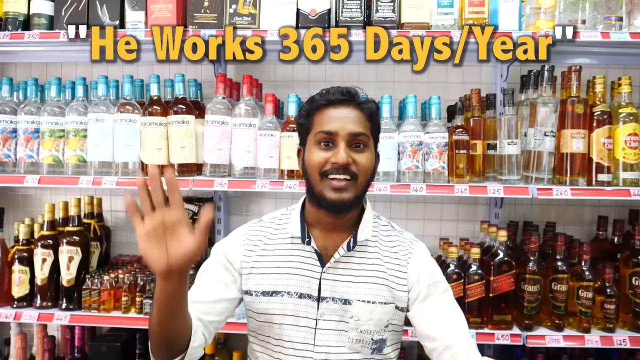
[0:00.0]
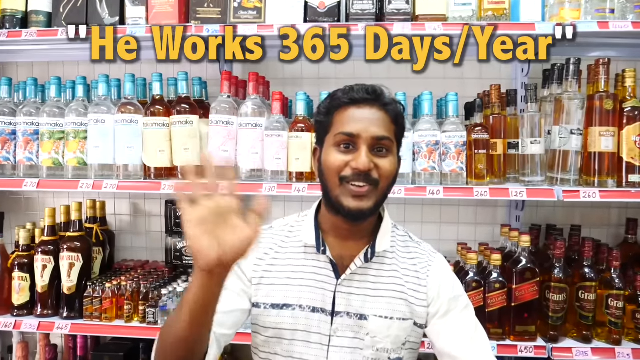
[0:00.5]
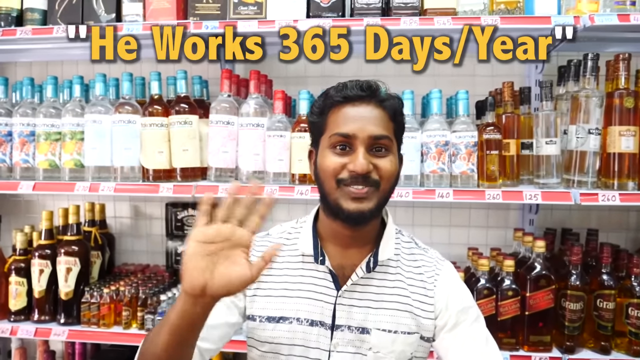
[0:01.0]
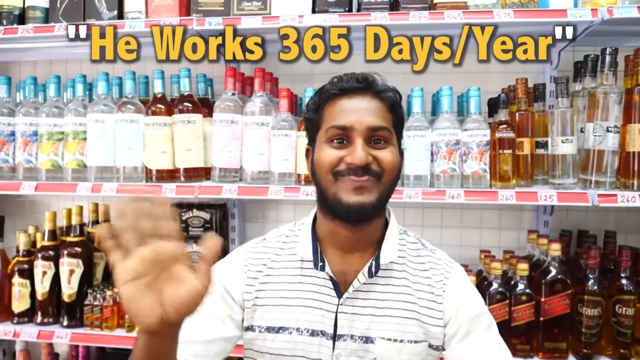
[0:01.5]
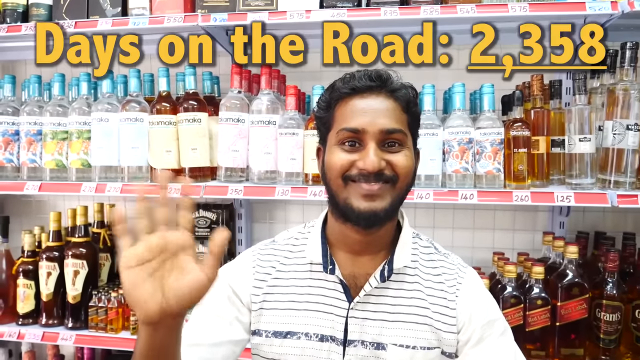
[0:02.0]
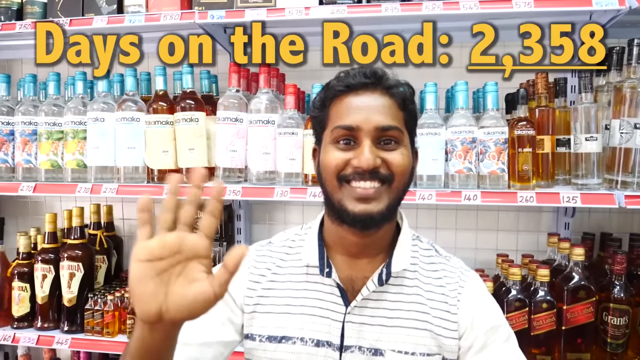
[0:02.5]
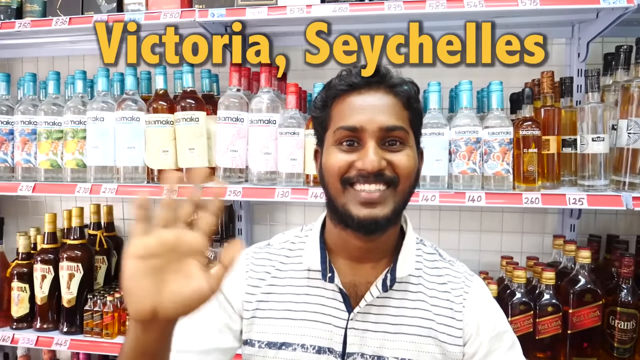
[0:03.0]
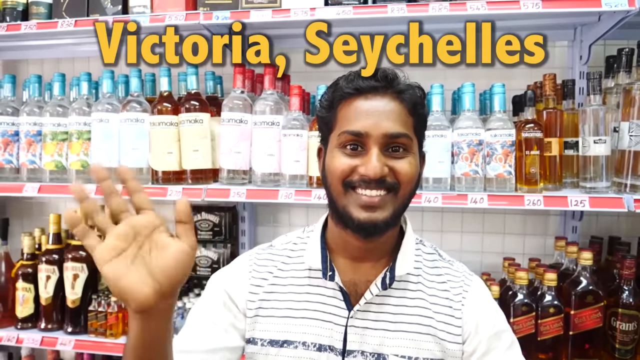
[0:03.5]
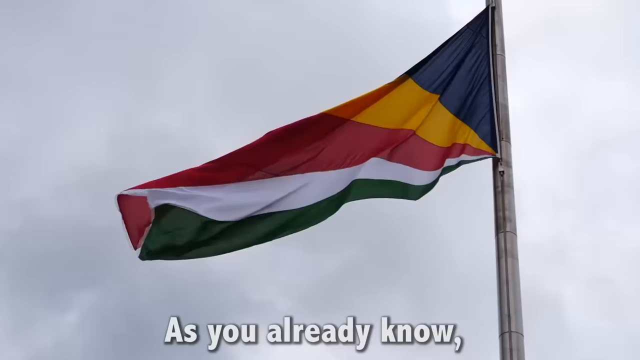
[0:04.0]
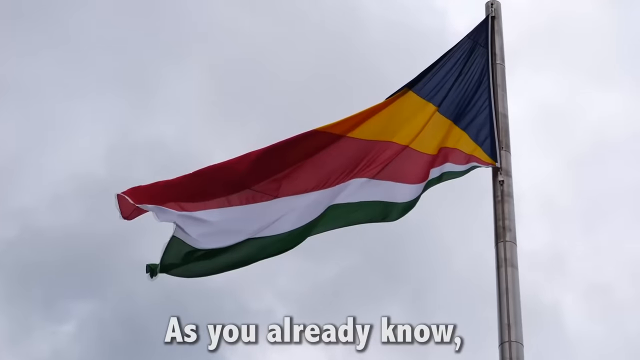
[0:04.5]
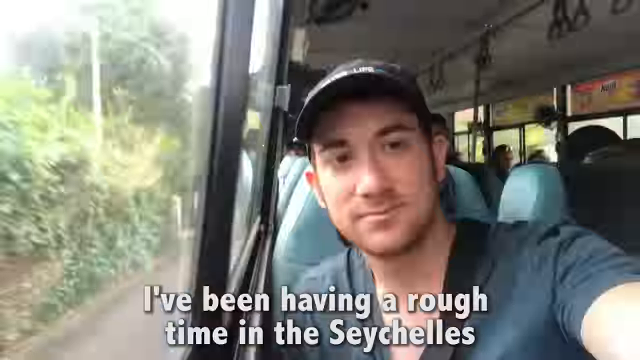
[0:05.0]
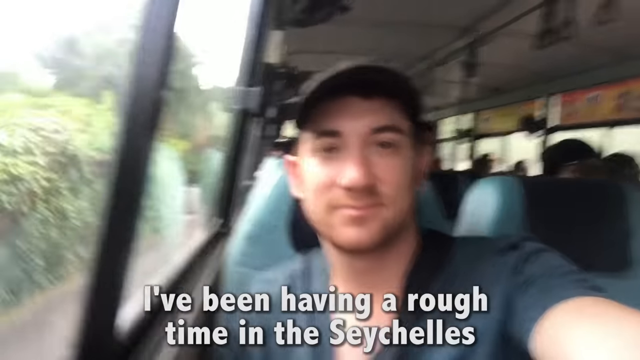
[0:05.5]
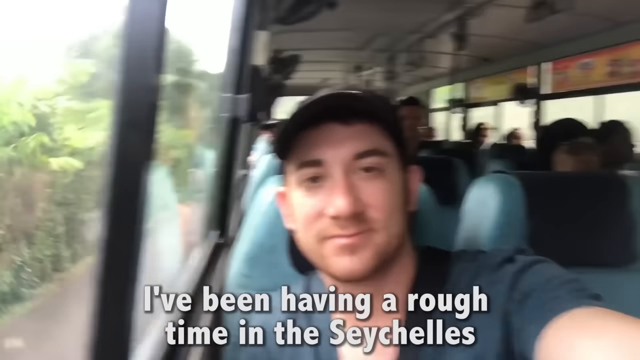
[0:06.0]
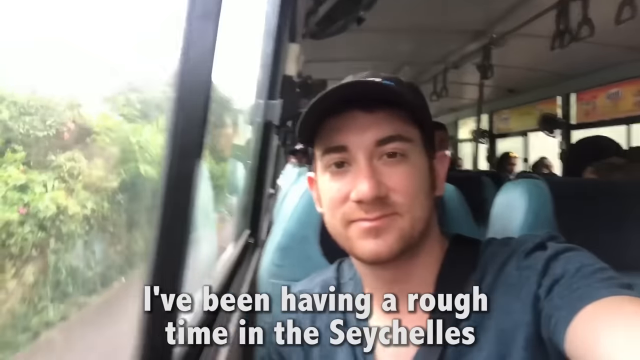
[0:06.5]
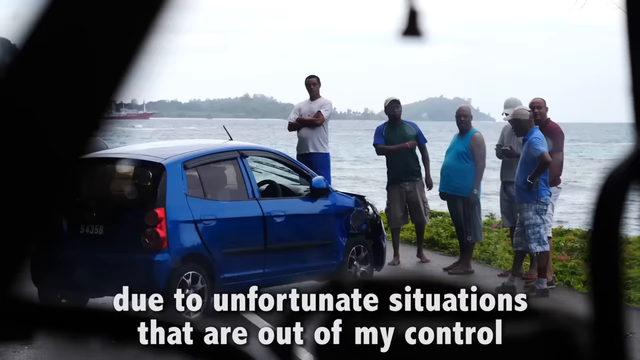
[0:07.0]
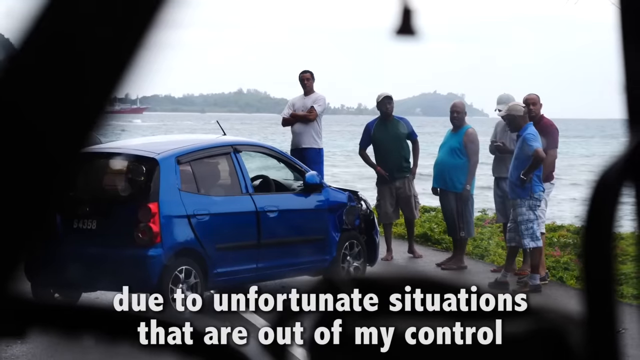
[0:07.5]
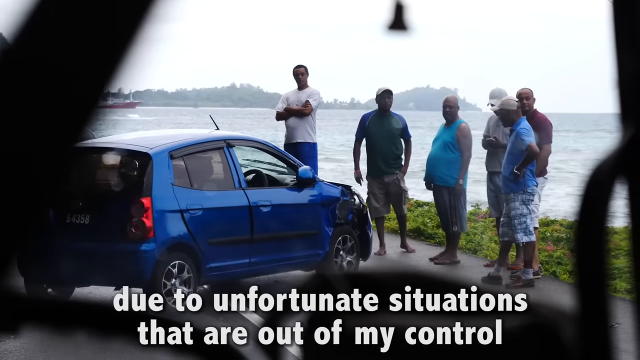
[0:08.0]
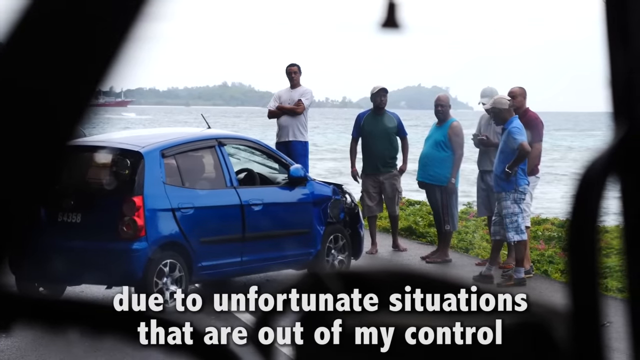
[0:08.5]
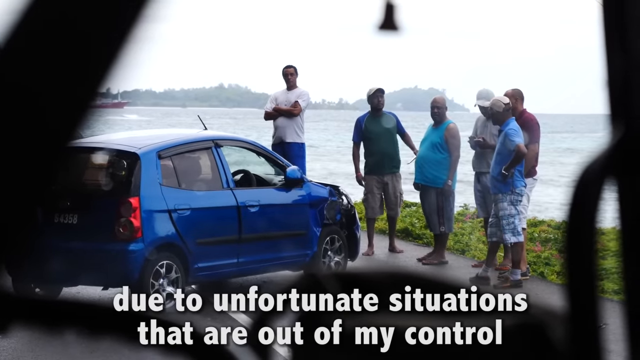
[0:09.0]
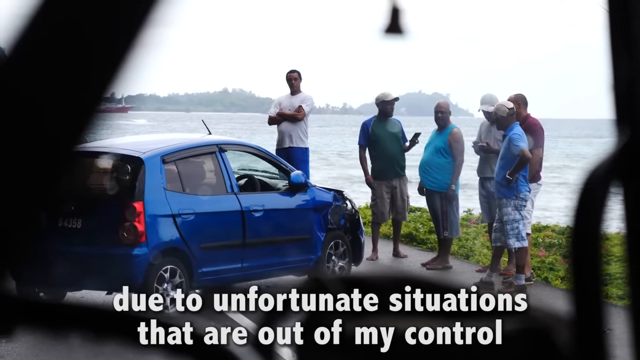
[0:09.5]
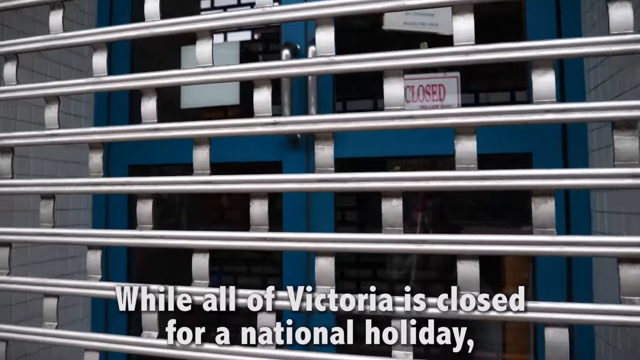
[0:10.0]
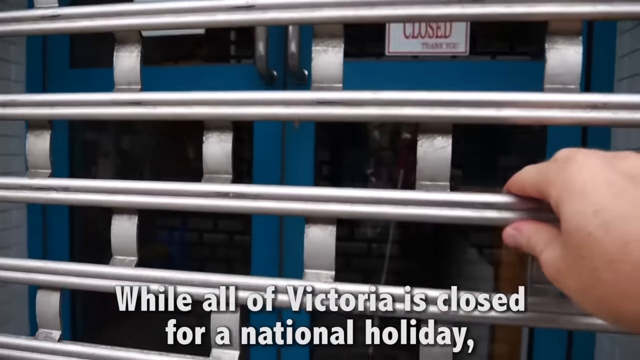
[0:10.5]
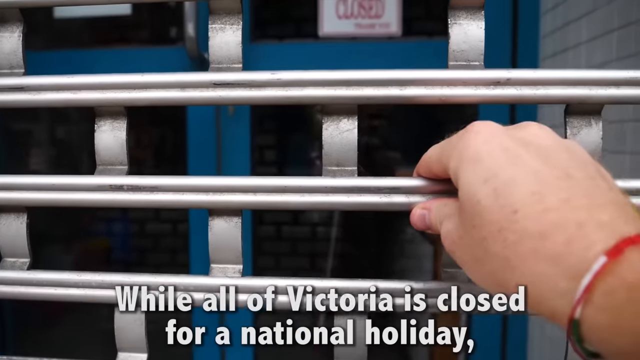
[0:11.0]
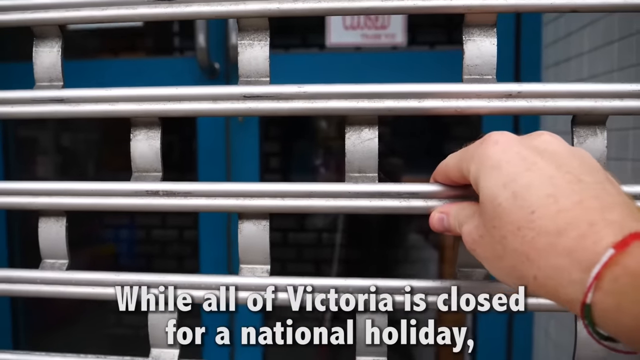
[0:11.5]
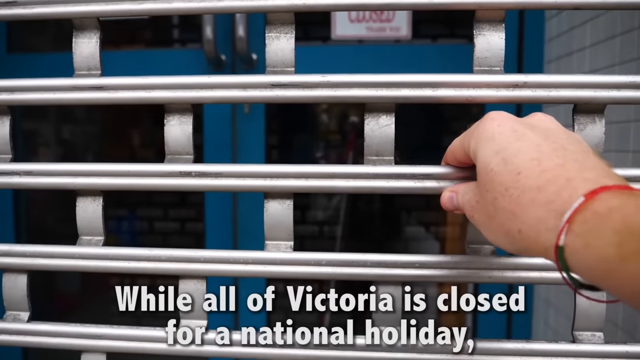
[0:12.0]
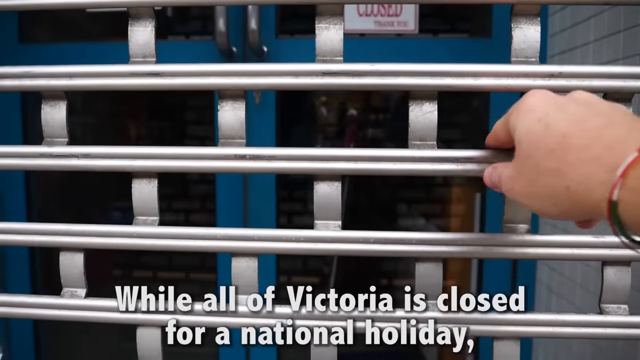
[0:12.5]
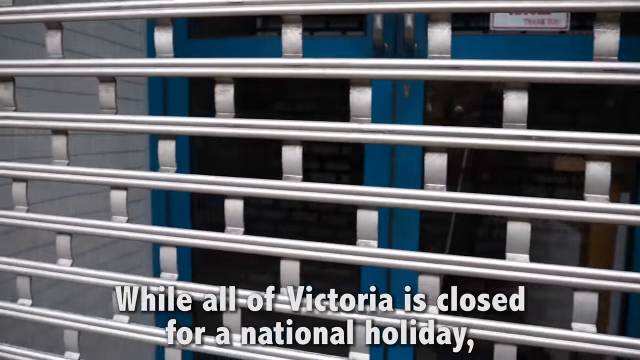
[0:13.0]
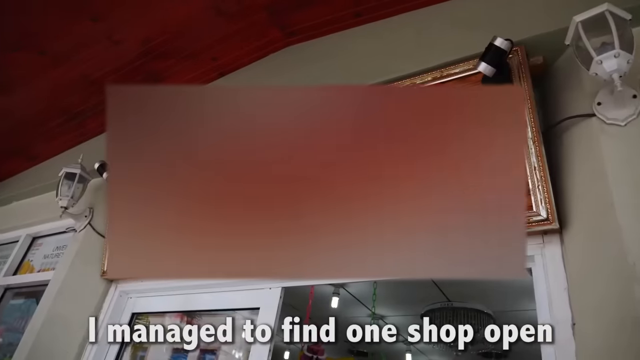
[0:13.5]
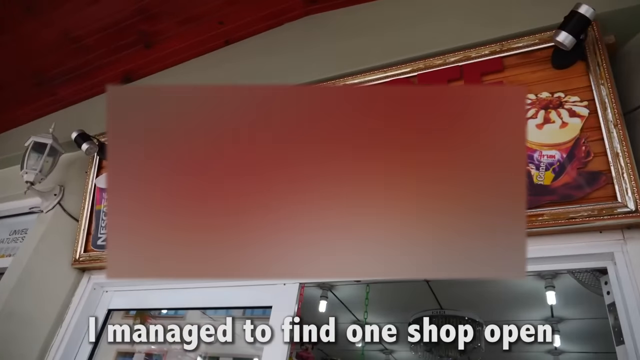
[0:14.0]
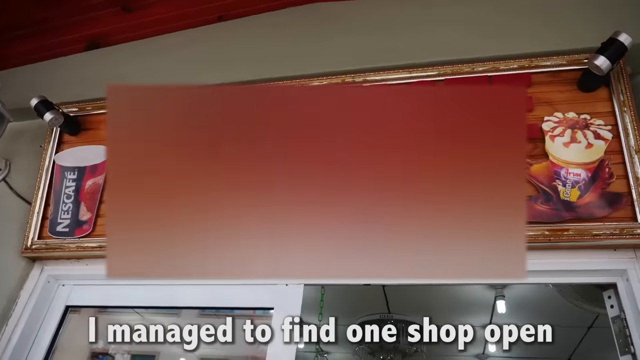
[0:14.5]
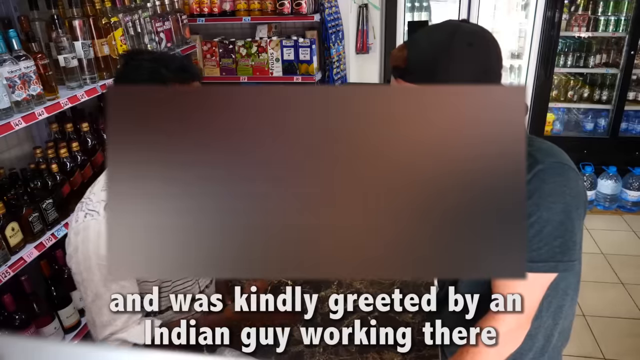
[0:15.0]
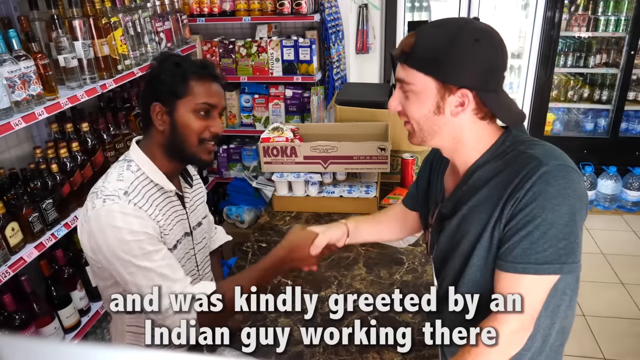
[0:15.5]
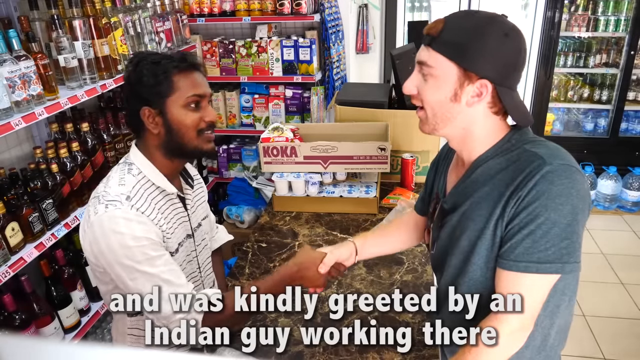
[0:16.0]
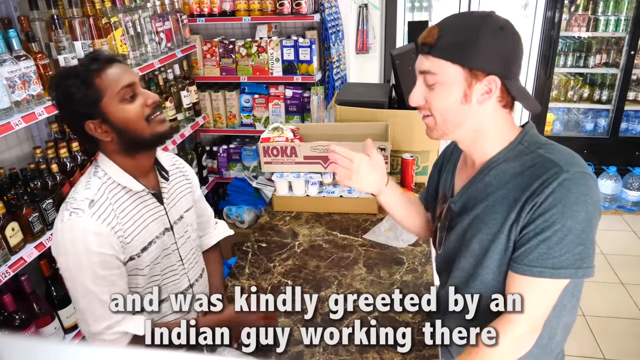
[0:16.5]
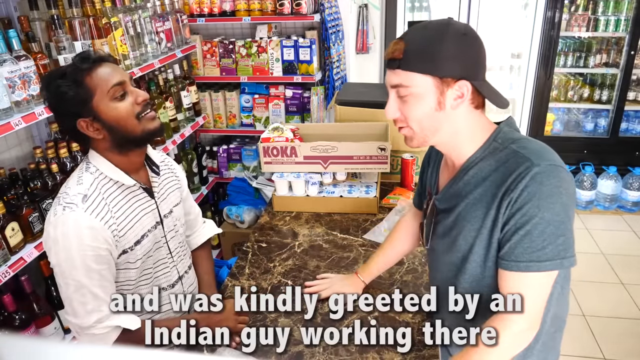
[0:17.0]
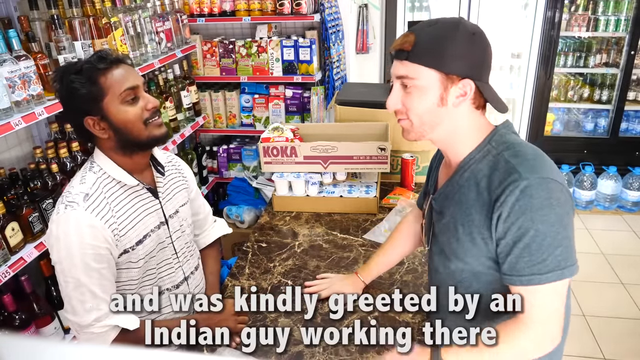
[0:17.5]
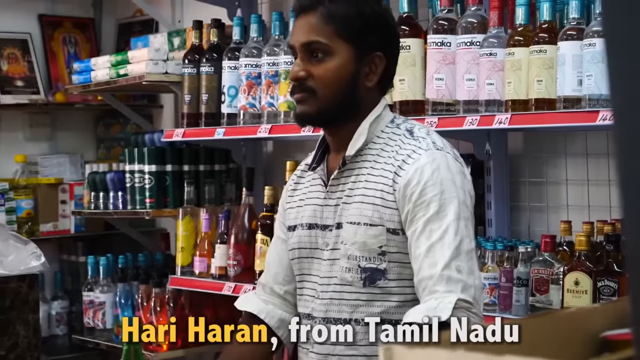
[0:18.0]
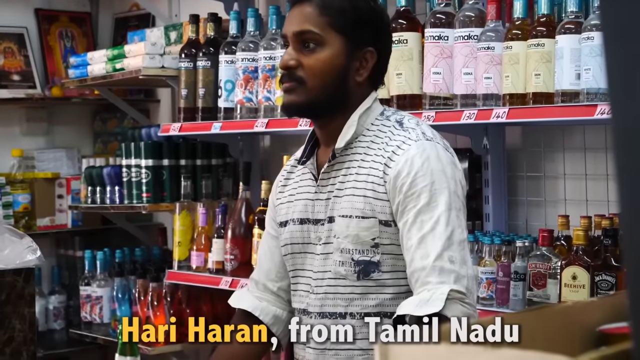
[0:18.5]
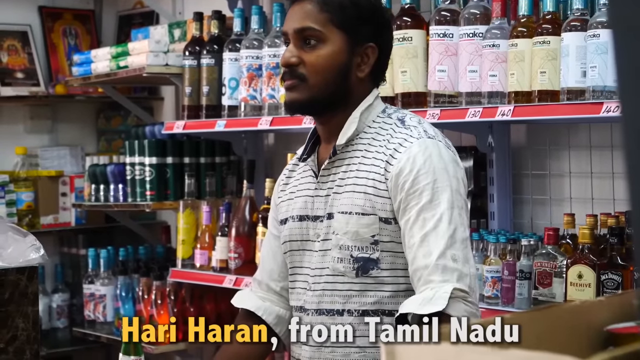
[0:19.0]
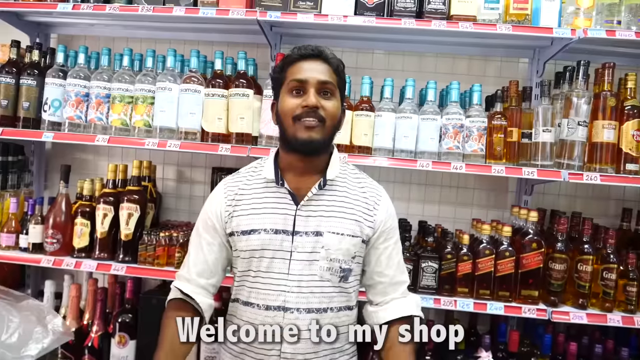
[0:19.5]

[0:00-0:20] A handsome, light-skinned Indian man waves at the camera. He has black hair, a black beard and a black moustache, and he smiles and seems to be saying hello. Behind him are different kinds of alcohol in bottles of different designs; the liquids inside are different colours, and the caps are different colours as well. Some of the bottles are Amarula and Jack Daniels, while other brands go unidentified. He keeps smiling at the camera with a very beautiful smile, showing white teeth. Prices are written in red and white on the alcohol shelves.